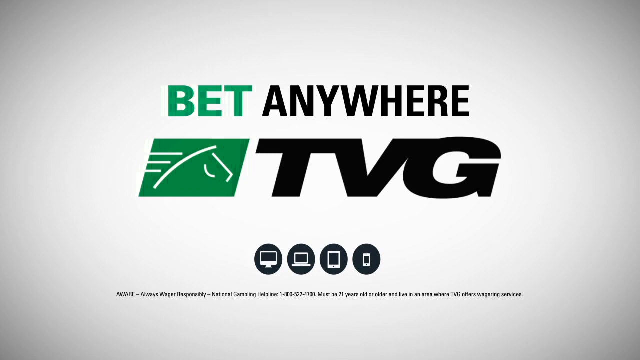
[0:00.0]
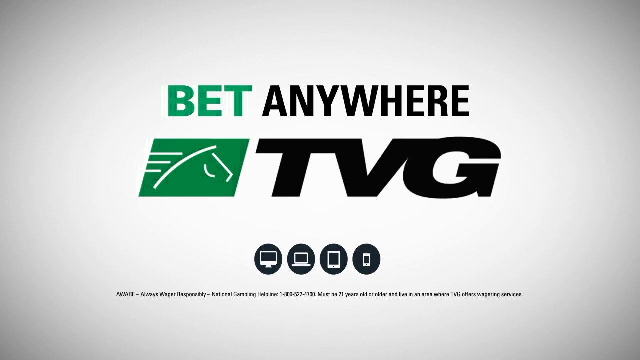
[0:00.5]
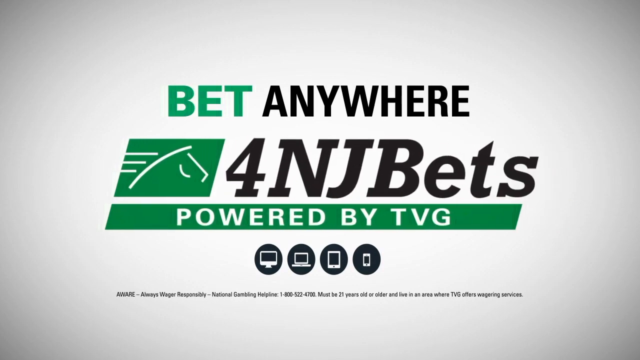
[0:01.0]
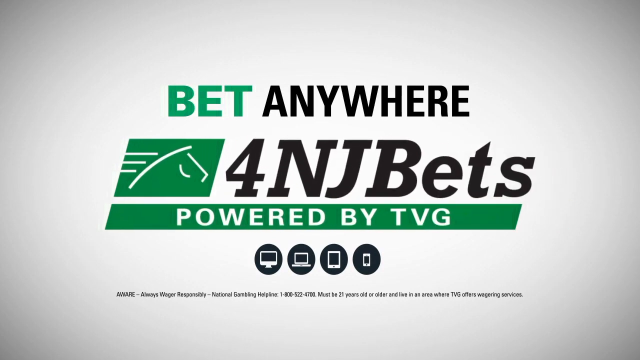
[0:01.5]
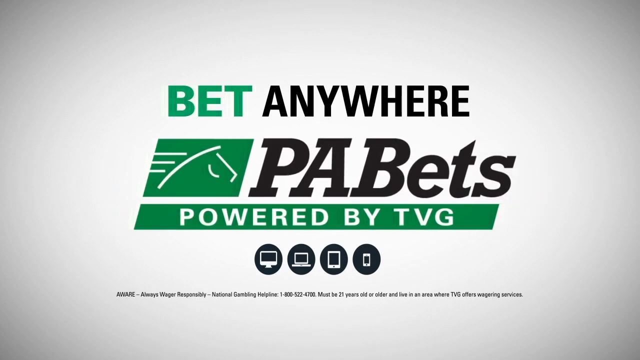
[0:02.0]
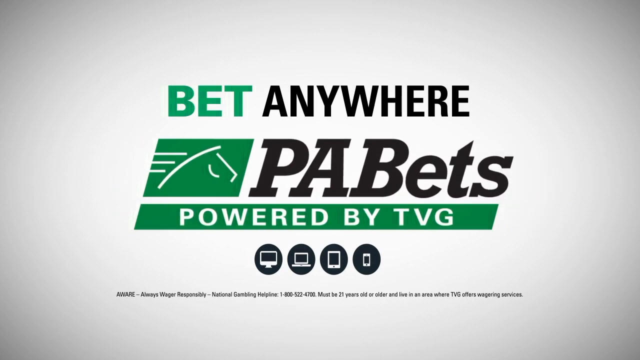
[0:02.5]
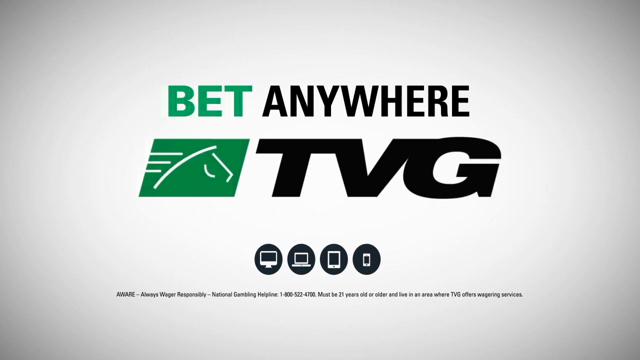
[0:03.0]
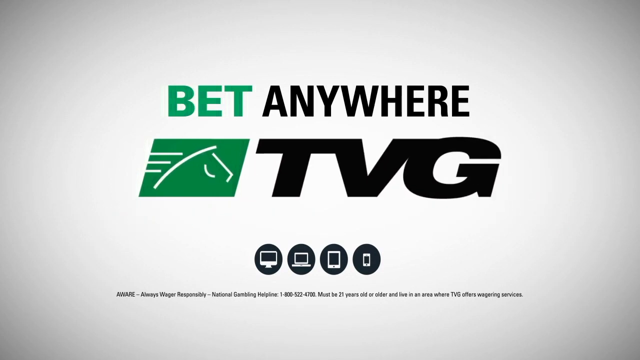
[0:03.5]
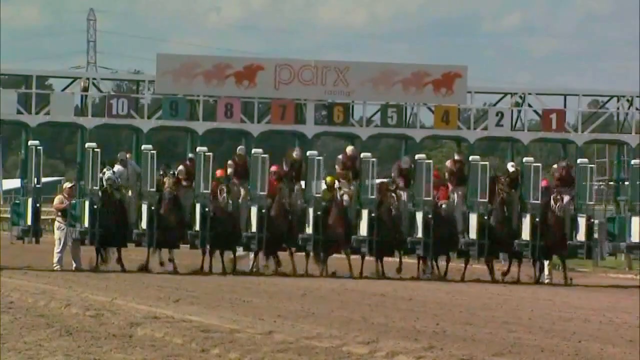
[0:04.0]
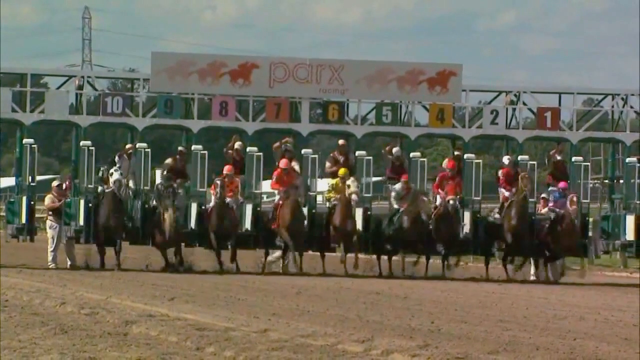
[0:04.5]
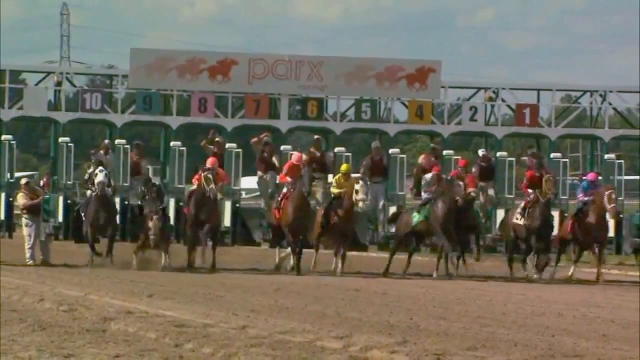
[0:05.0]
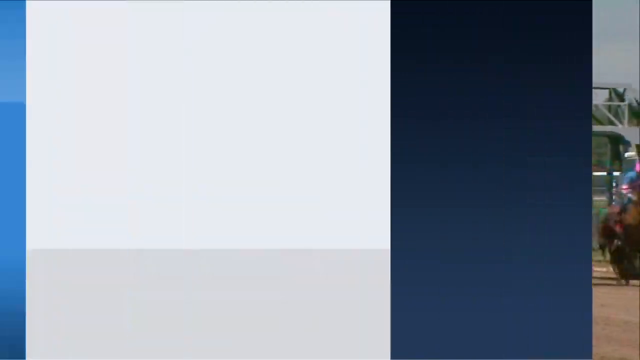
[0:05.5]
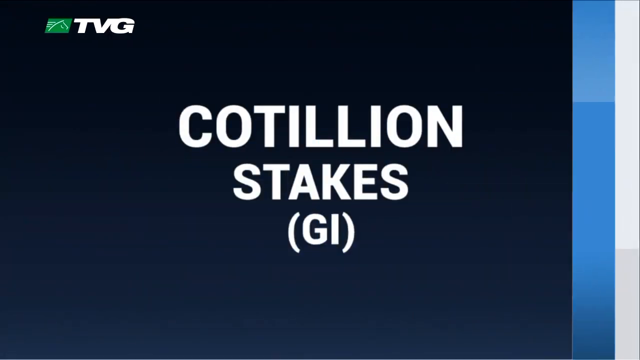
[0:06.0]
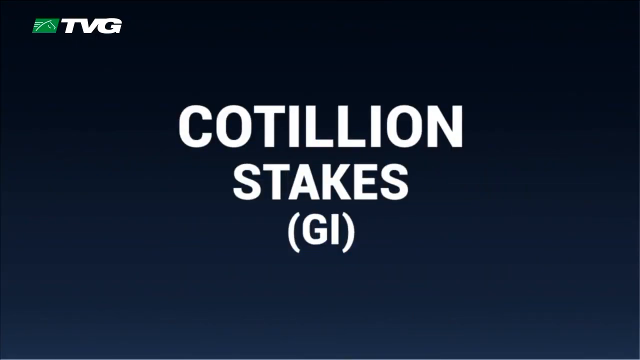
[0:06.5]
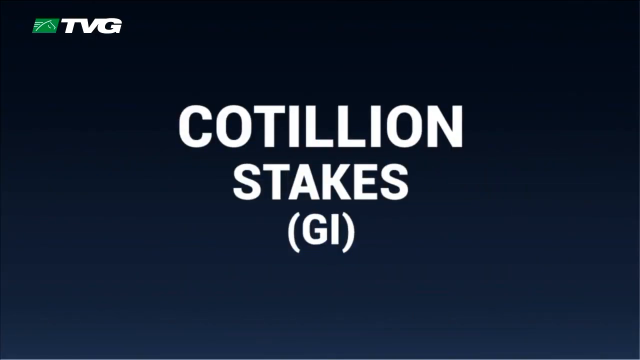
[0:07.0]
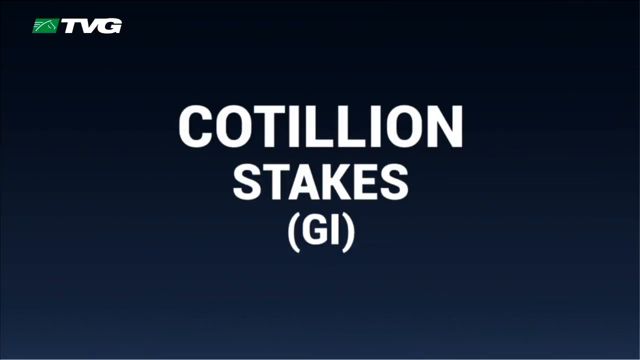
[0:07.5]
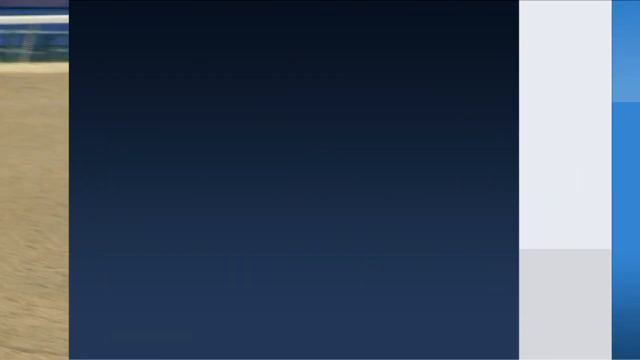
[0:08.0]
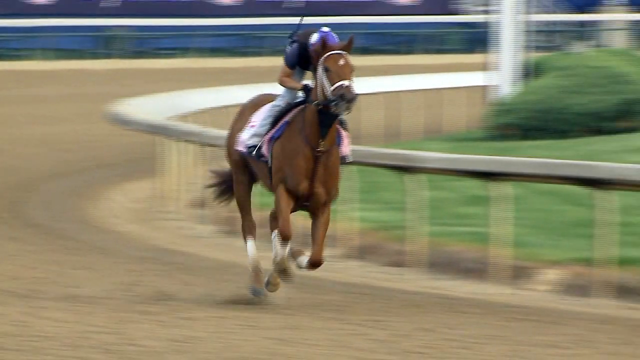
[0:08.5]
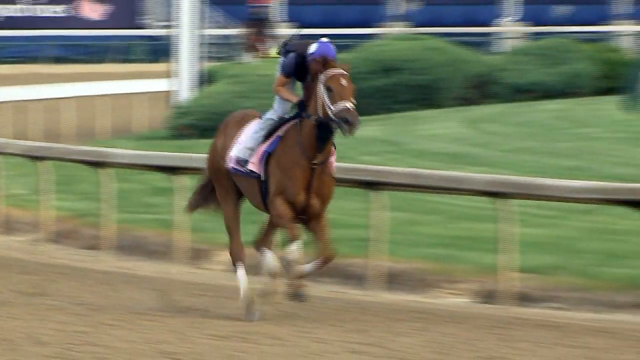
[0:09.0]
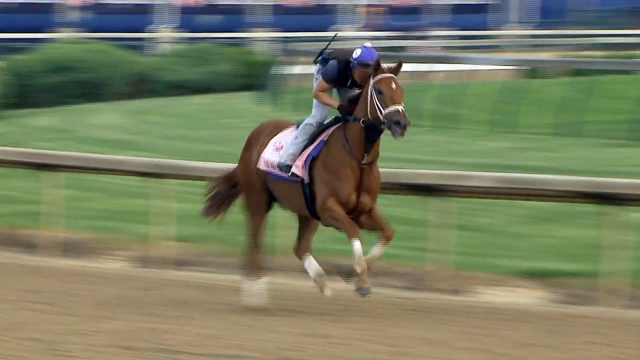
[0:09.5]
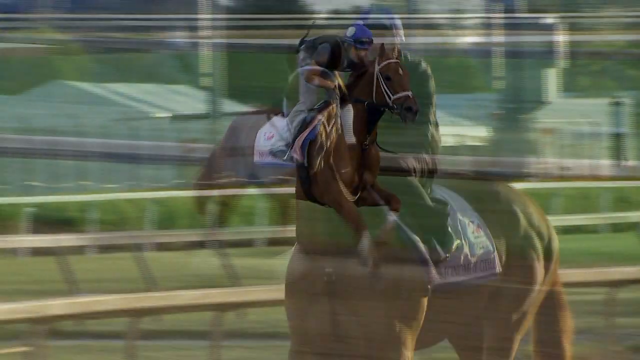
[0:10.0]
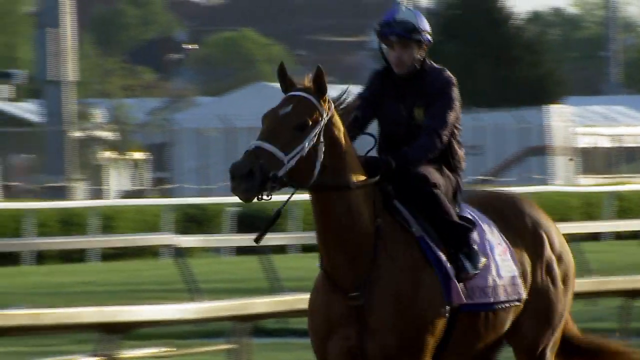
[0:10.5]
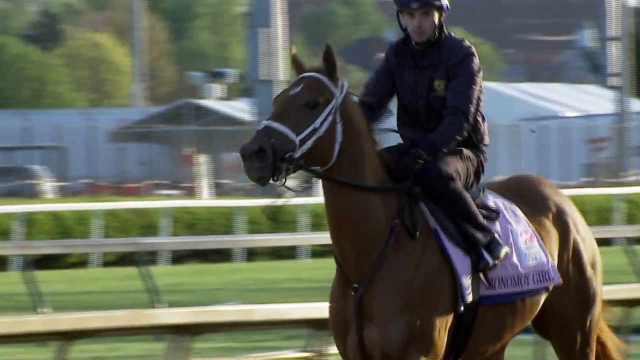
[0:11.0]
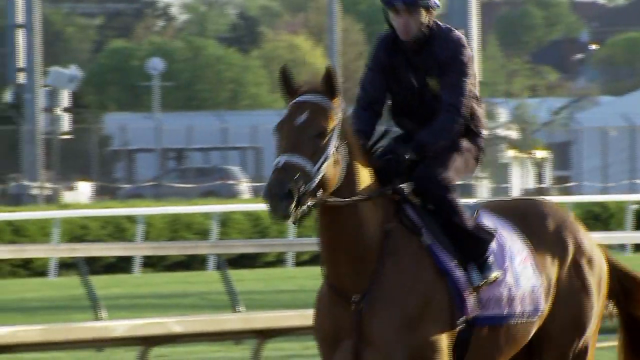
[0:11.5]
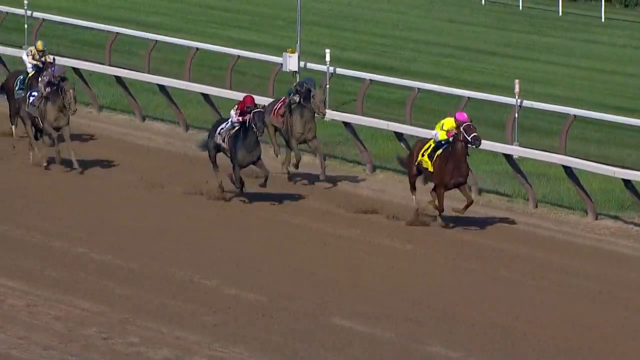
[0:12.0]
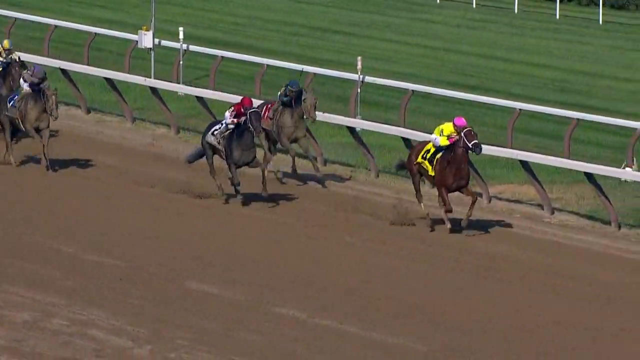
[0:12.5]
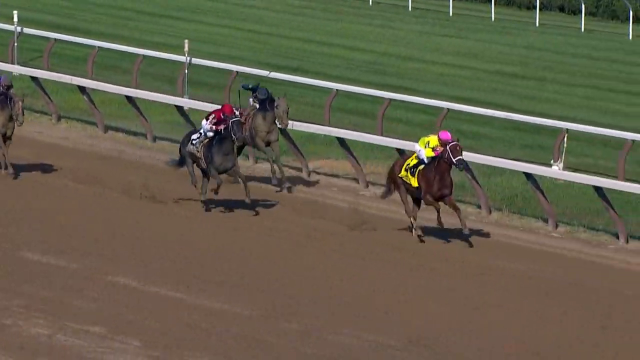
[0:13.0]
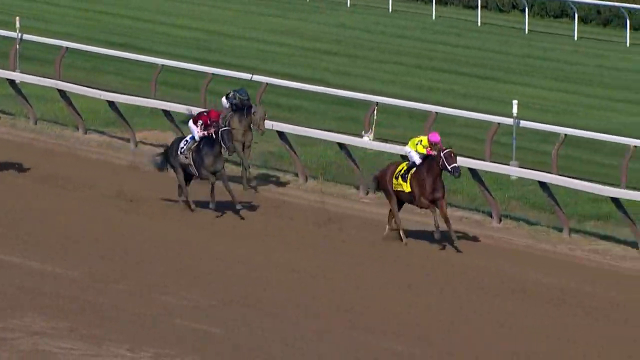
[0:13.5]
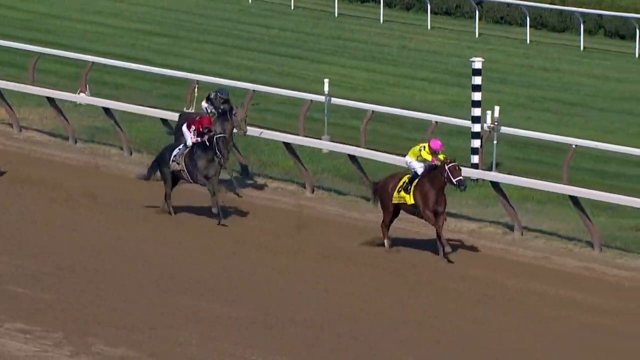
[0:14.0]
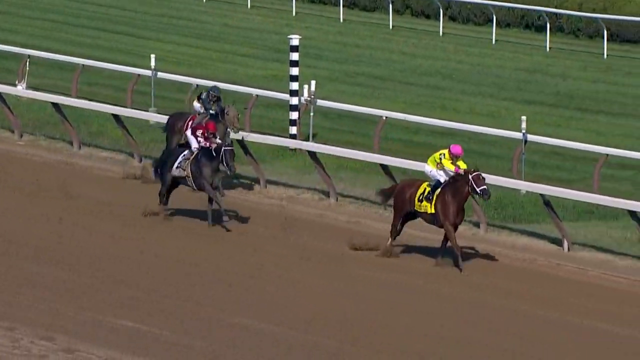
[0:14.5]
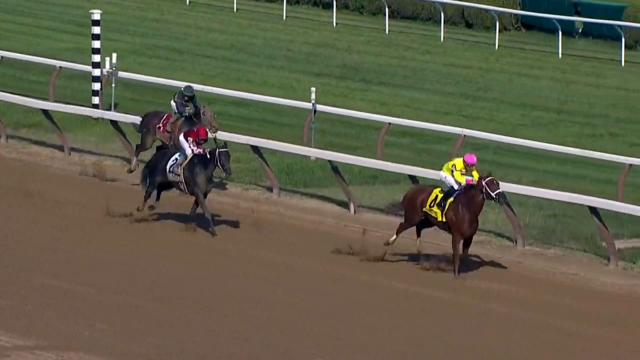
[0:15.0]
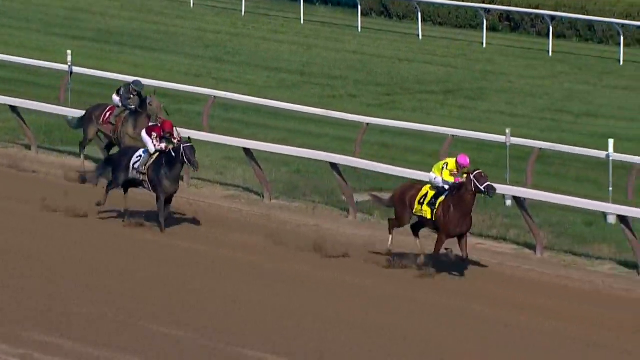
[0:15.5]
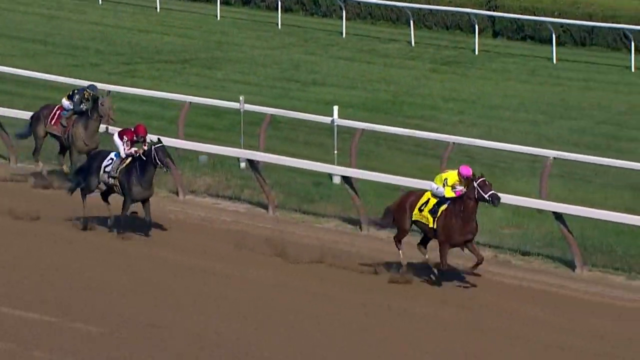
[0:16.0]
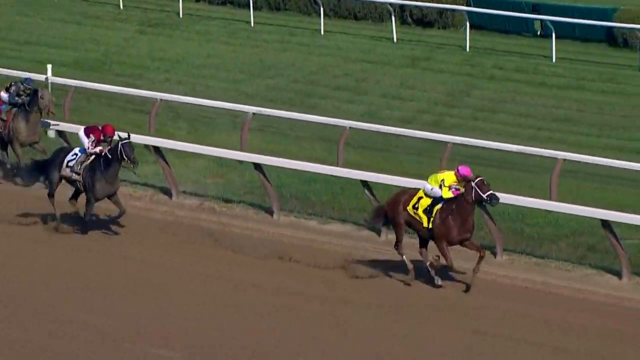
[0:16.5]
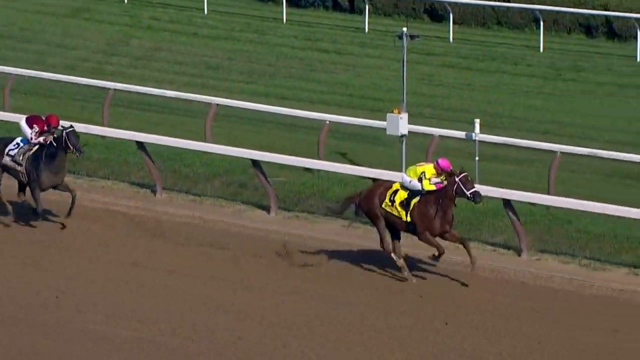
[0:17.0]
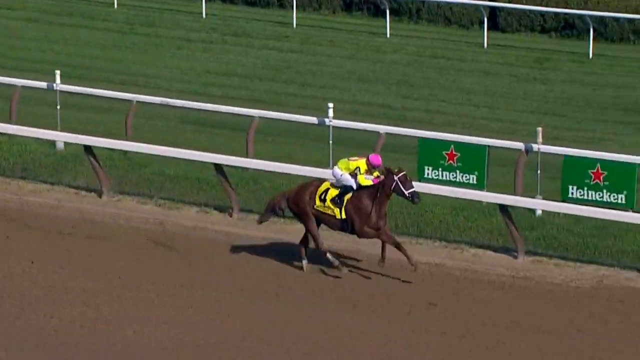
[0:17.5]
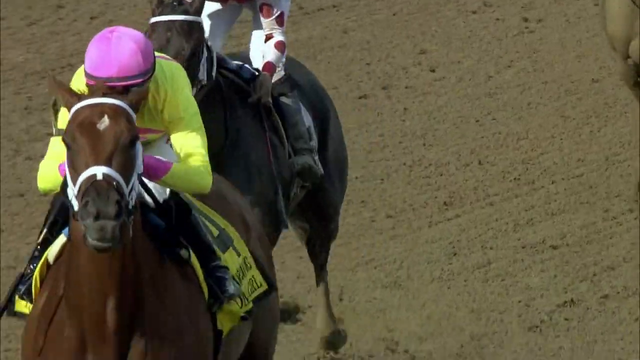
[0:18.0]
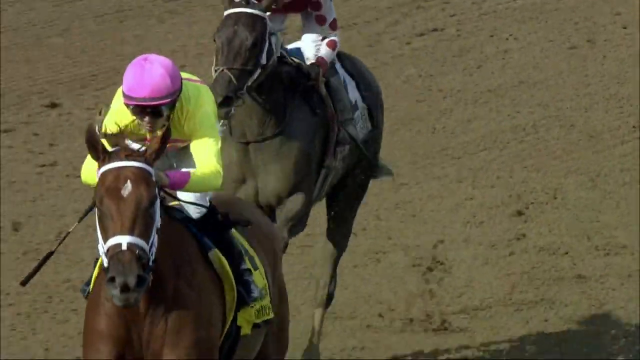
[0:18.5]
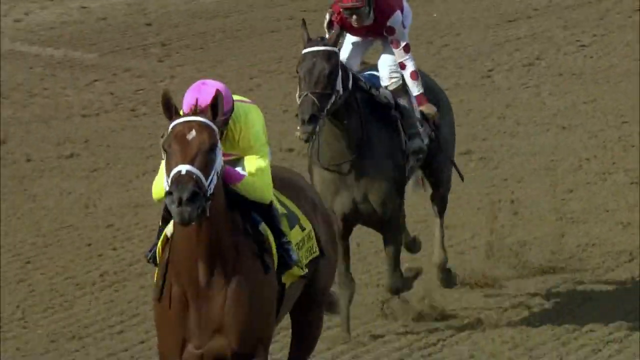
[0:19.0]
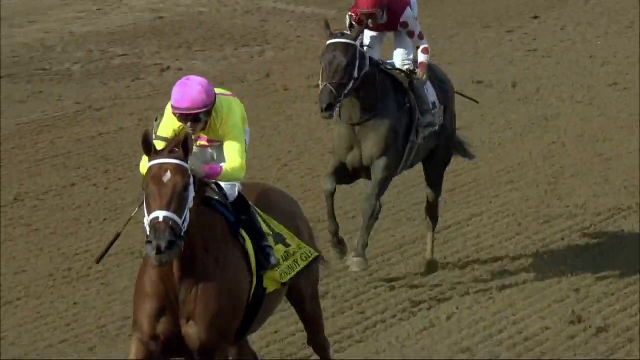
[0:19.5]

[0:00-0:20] The words "BET" in green capital letters and "ANYWHERE" in black capital letters appear at the top. Underneath them is a green logo on the left, and to its right "TBG" in large capital letters. At the bottom of the screen is the text "AWARE, ALWAYS WAGER RESPONSIBLY, NATIONAL GAMBLING HELPLINE, MUST BE 21 YEARS OLD OR OLDER" and "LIVE IN AN AREA WHERE TBG OFFERS WAGERING SERVICES". It appears to be some kind of betting video. Next, "BET ANYWHERE" is shown with "FOR NJ BETS POWERED BY TBG" underneath, which then changes to "PA BETS POWERED BY TBG". Horses then come out of their blocks, about to race, apparently with jockeys on them. The word "PARX" is at the top of the blocks, and there are 10 blocks with horses starting to race. The words "COTILLION STAKES GI" appear on the screen, and a horse with a jockey in a blue hat starts riding.